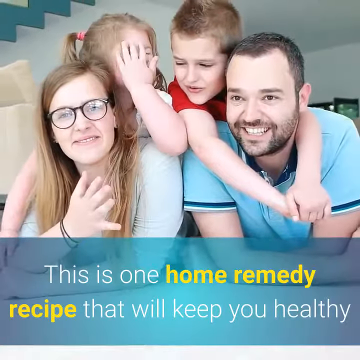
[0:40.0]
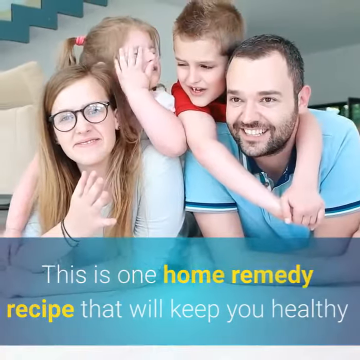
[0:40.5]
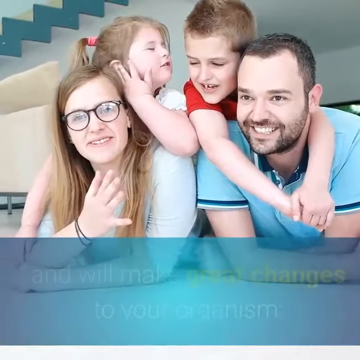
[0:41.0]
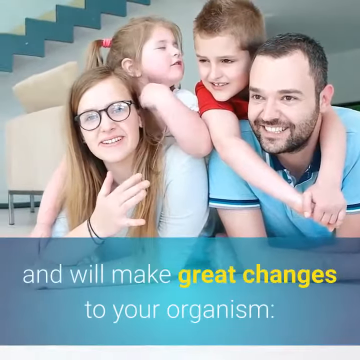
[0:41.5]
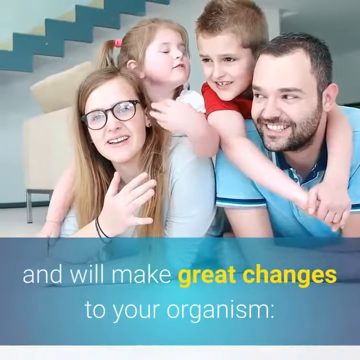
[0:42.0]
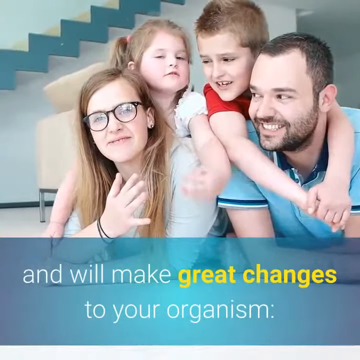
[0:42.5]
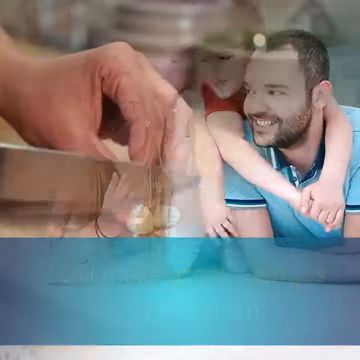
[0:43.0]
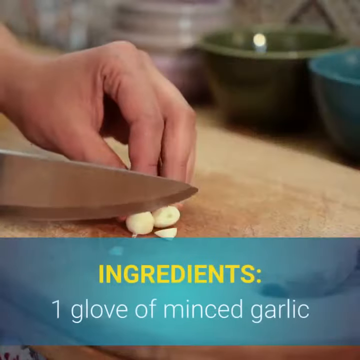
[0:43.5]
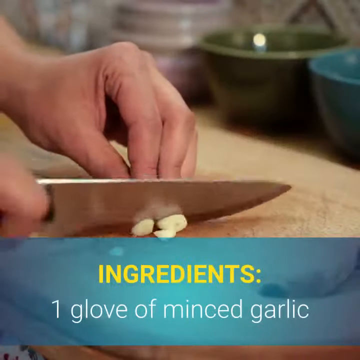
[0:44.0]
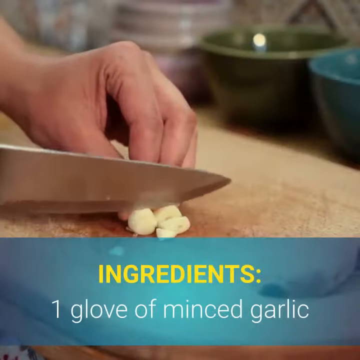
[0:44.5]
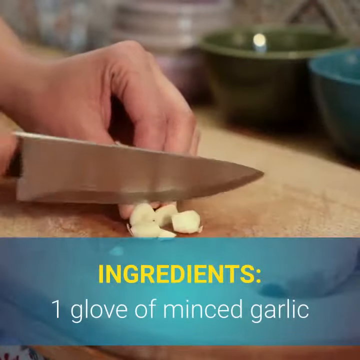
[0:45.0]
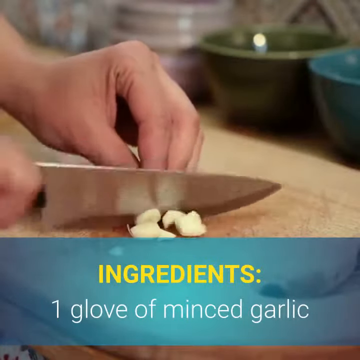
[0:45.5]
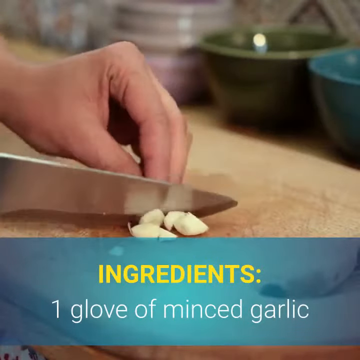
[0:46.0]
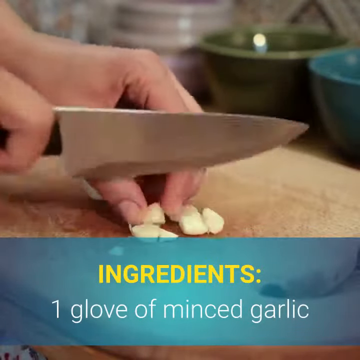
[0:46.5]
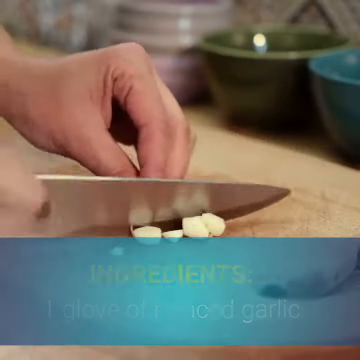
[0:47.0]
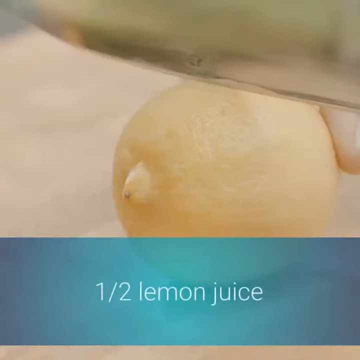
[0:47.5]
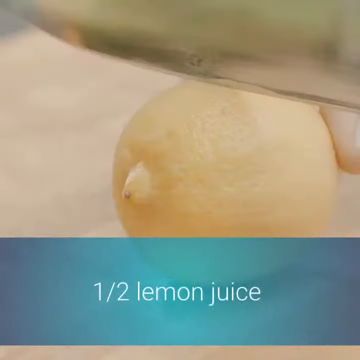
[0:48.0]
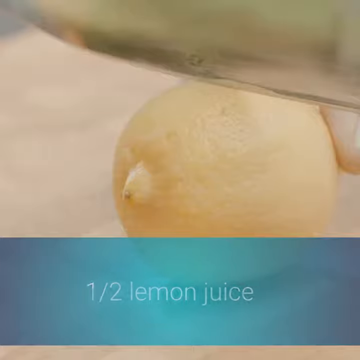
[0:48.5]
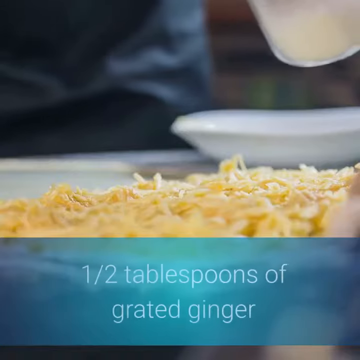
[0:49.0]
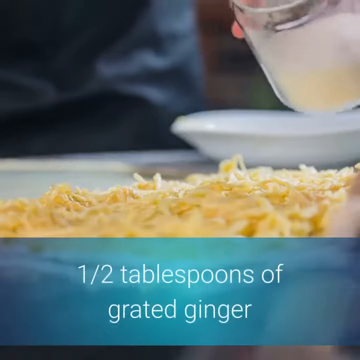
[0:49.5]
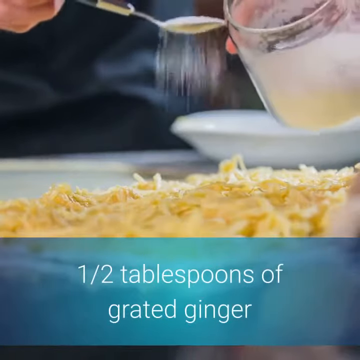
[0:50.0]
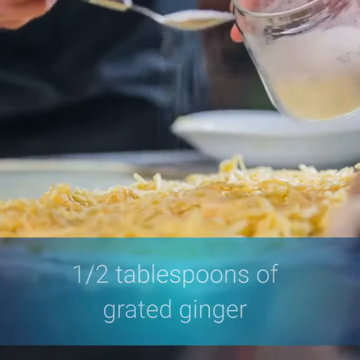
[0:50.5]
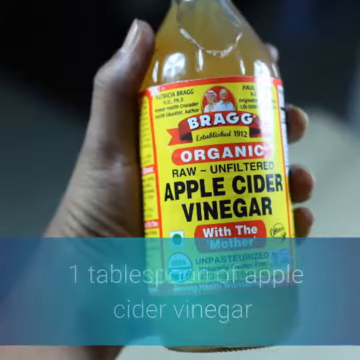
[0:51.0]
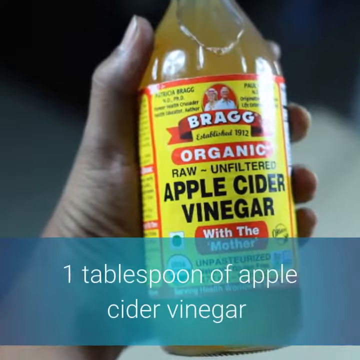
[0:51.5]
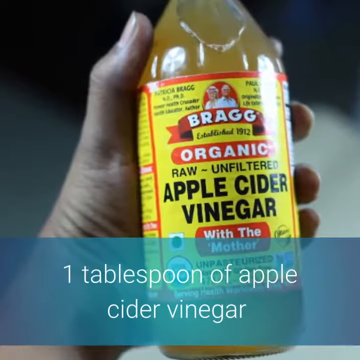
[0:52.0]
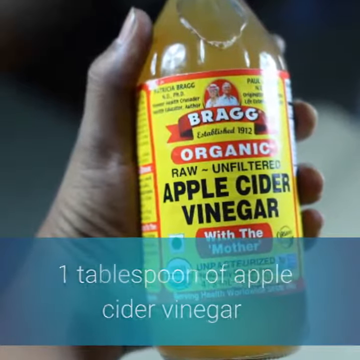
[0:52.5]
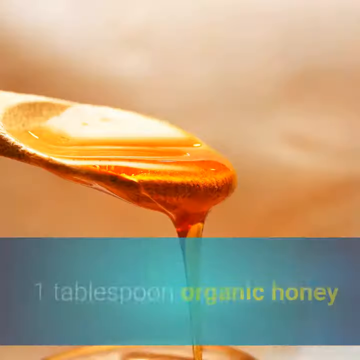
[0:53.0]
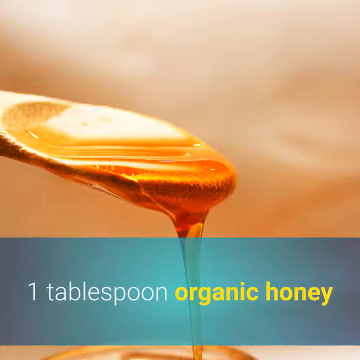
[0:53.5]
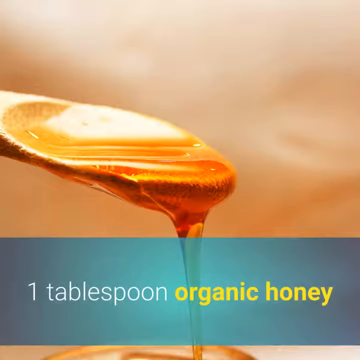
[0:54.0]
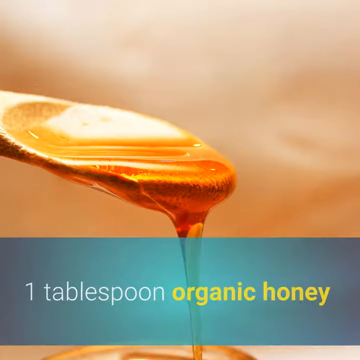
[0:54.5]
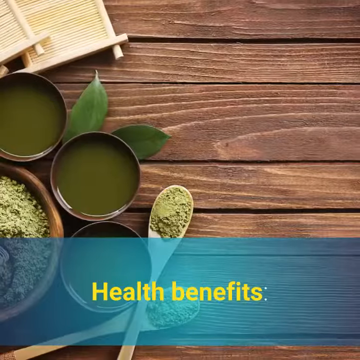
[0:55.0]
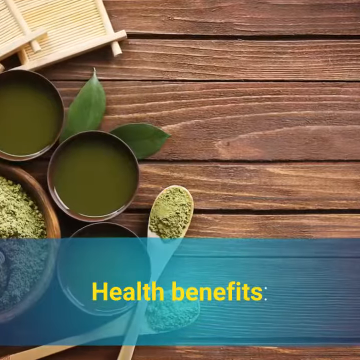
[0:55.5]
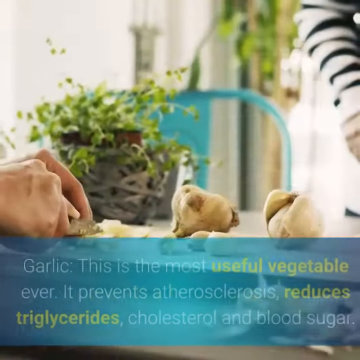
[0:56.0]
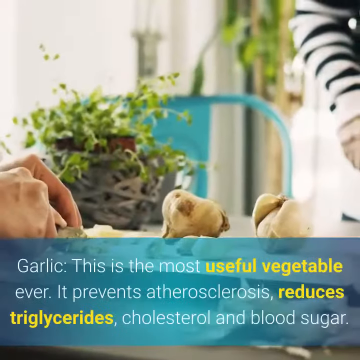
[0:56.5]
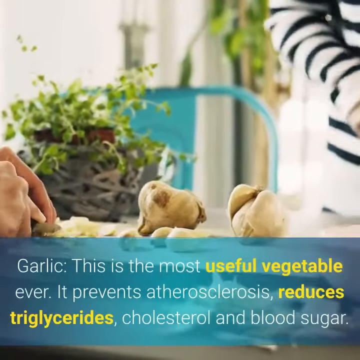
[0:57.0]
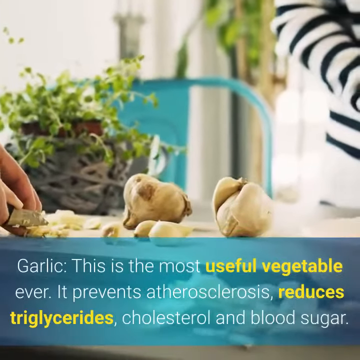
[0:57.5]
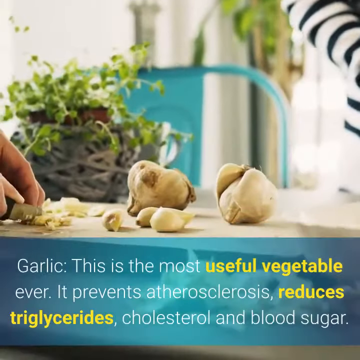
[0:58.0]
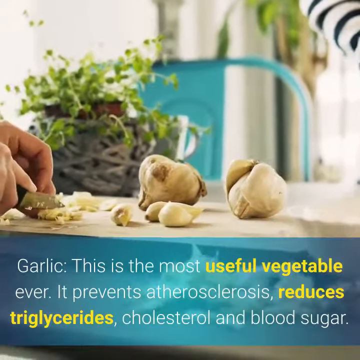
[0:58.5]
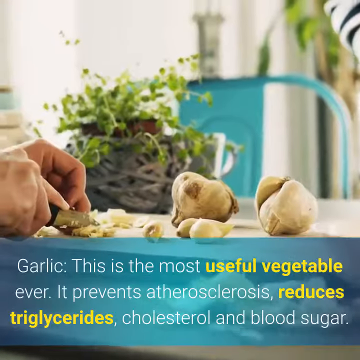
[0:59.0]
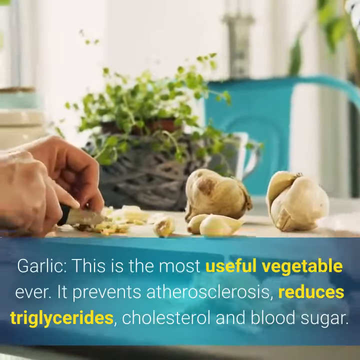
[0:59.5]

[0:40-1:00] A family of four, a woman and a man with two children kind of hanging over them, smiles for the camera. A blue banner with white and yellow text reads "this is one home remedy recipe that will keep you healthy and will make great changes to your organism." The scene transitions to a kitchen, where a person cuts garlic with a knife; bowls are in the background, along with what looks like a chopping board. A blue banner with white and yellow text reads "ingredients one clove of minced garlic" as the garlic is cut up. Next, a lemon is cut, with a banner reading "one half lemon juice." Then what looks like cheese appears on the ground, with a blue banner in white text reading "a half a tablespoon of grated ginger." A bottle of Pragg's organic raw unfiltered apple cider vinegar is shown with a blue banner in white text reading "one tablespoon of apple cider vinegar." A picture of honey on a spoon follows, with a blue banner reading "one tablespoon of organic honey." Then a banner reading "health benefits" appears with a table of healthy food. Text reads "garlic this is the most useful vegetable ever it prevents atherosclerosis, reduces triglycerides, cholesterol, and blood sugar," while someone chops up what looks like garlic cloves.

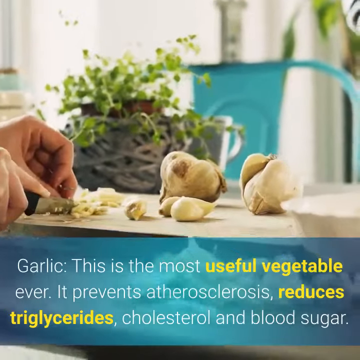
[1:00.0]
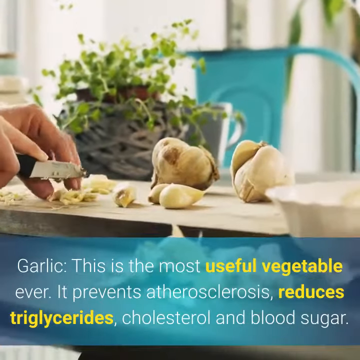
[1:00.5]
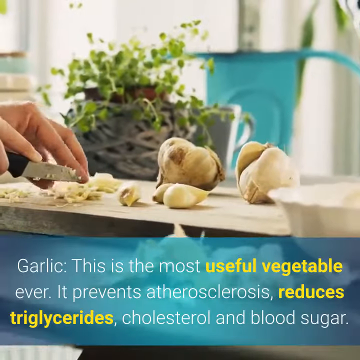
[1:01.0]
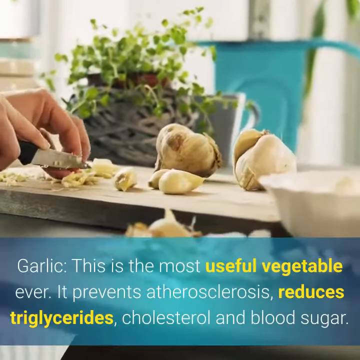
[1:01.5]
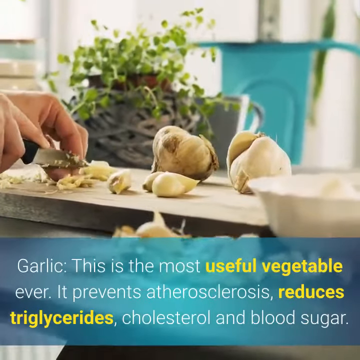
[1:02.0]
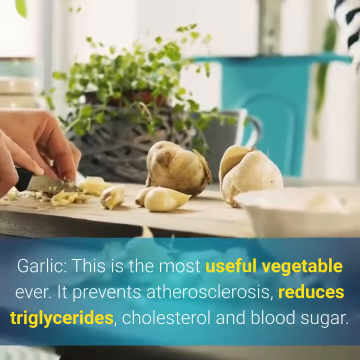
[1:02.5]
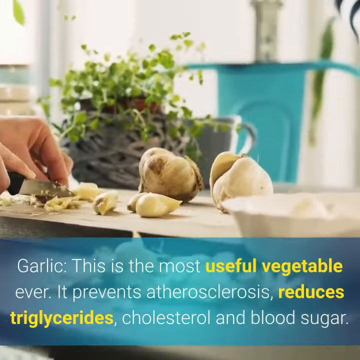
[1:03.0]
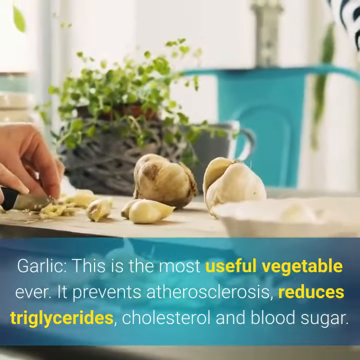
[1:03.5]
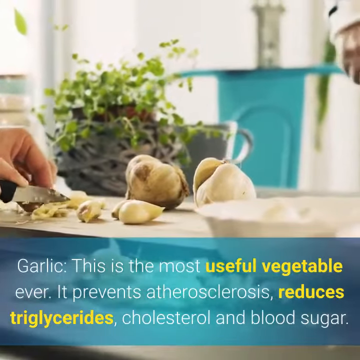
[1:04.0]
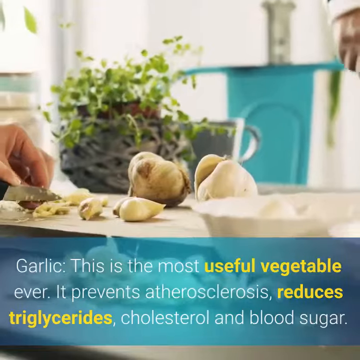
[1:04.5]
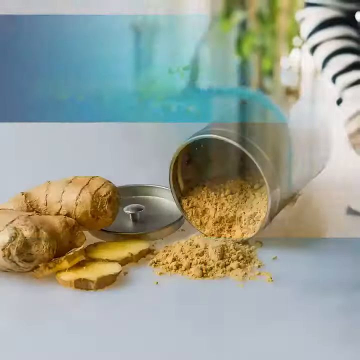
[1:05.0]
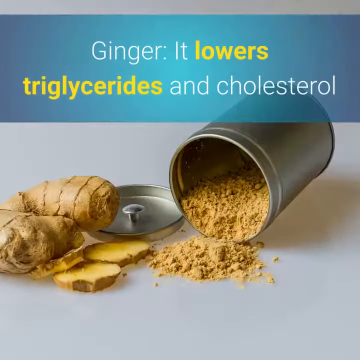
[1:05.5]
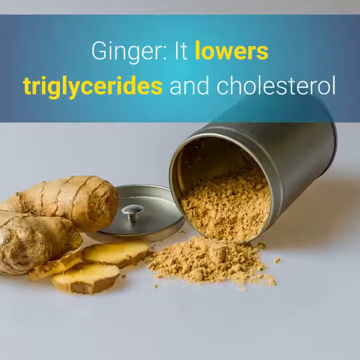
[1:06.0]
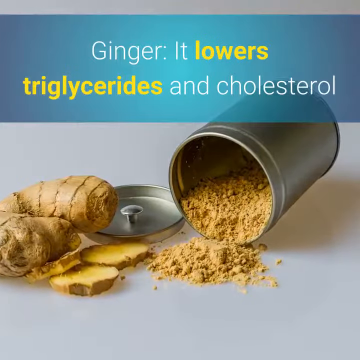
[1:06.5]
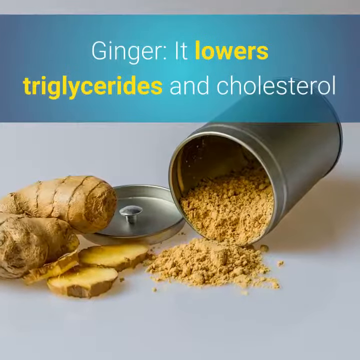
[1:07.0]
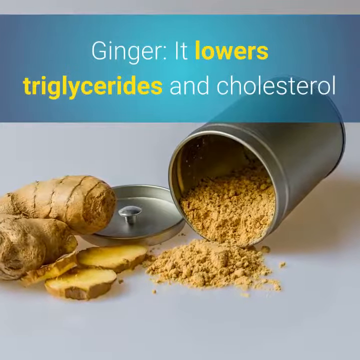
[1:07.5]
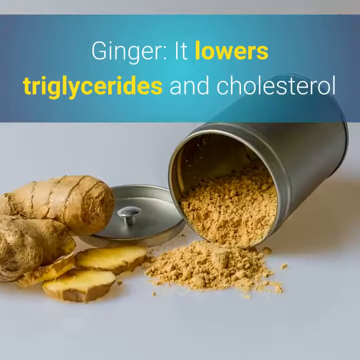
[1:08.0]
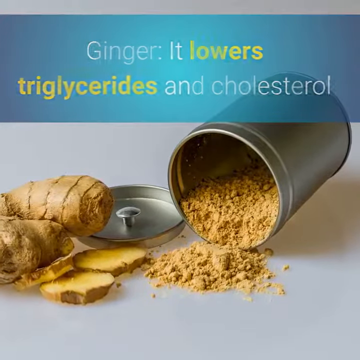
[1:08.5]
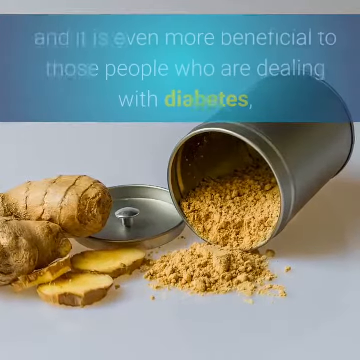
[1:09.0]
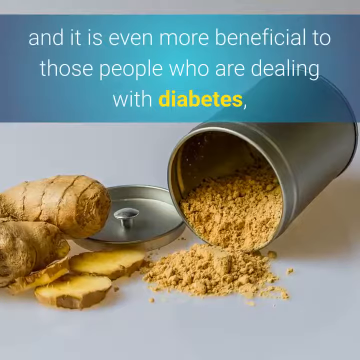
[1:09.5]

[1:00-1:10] Someone chops up what looks like garlic under a blue banner with white and yellow text reading "garlic. This is the most useful vegetable ever. It prevents atherosclerosis, reduces triglycerides, cholesterol, and blood sugar." The scene transitions to a container of ginger that has spilled over, with a banner in white and yellow reading "ginger. It lowers triglycerides and cholesterol." Additional text then appears: "and it is even more beneficial to those people who are dealing with diabetes."